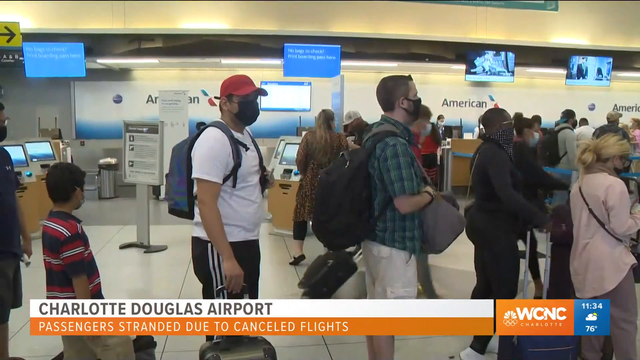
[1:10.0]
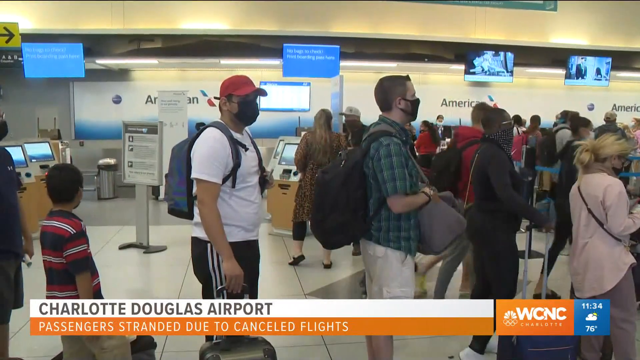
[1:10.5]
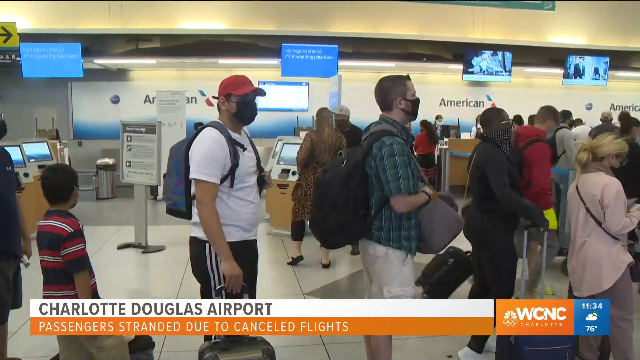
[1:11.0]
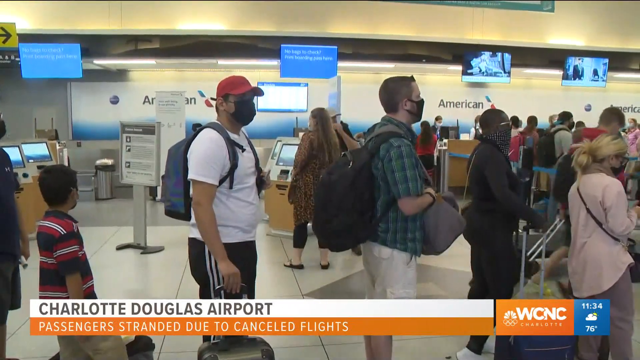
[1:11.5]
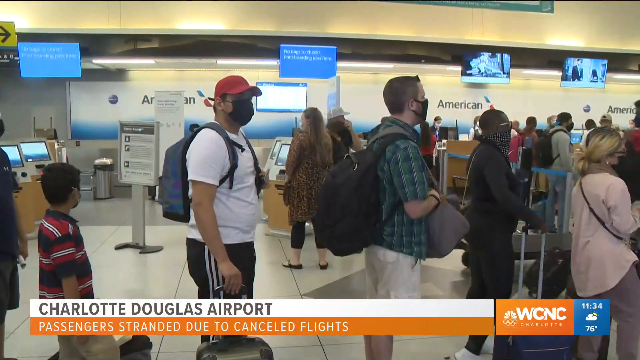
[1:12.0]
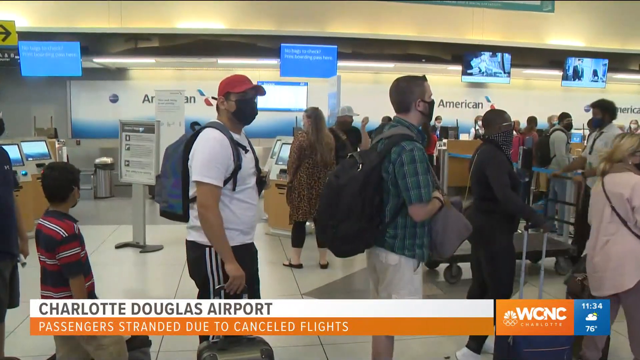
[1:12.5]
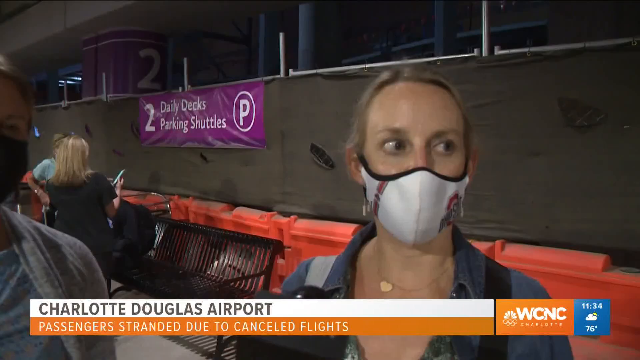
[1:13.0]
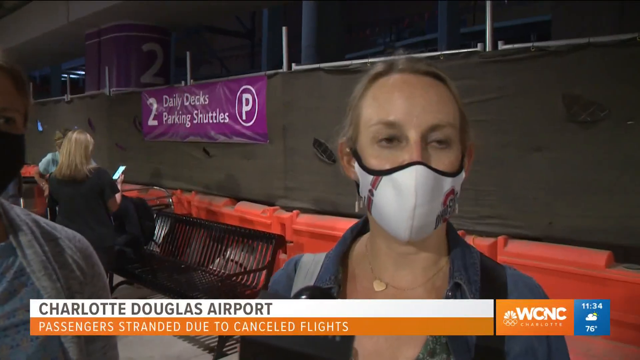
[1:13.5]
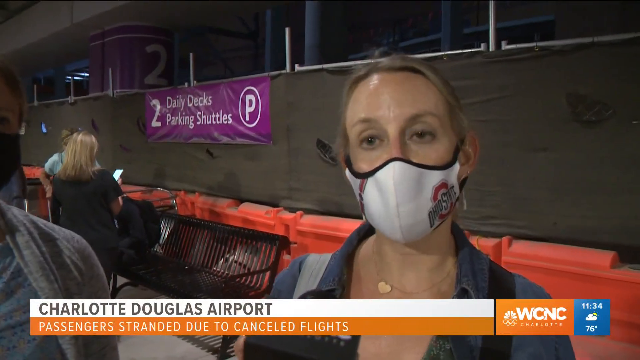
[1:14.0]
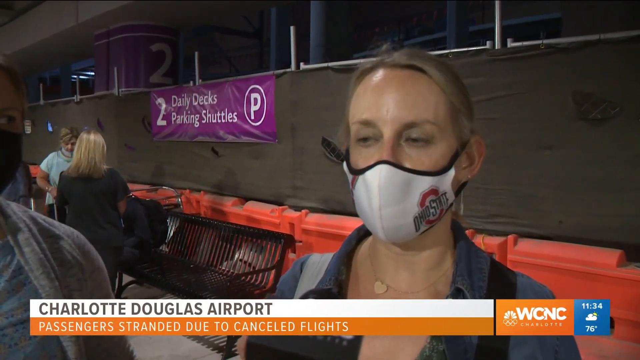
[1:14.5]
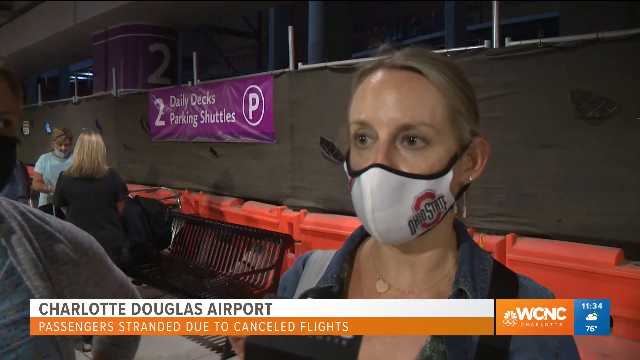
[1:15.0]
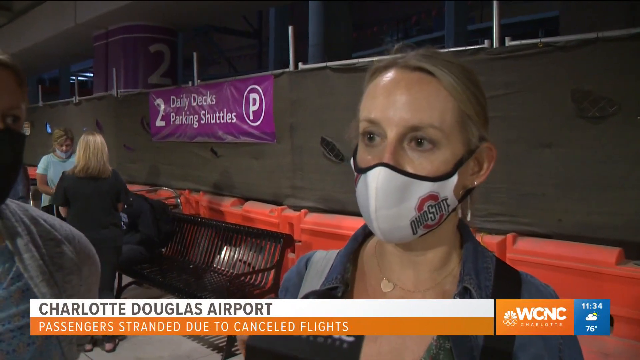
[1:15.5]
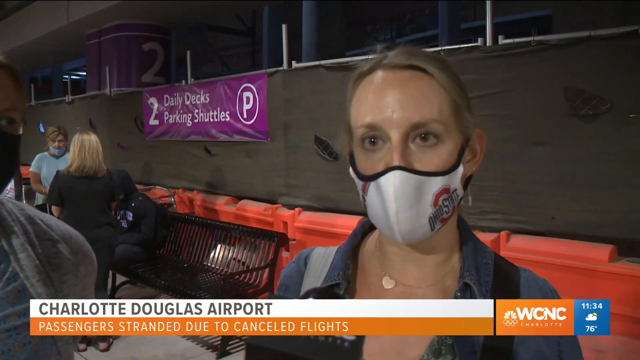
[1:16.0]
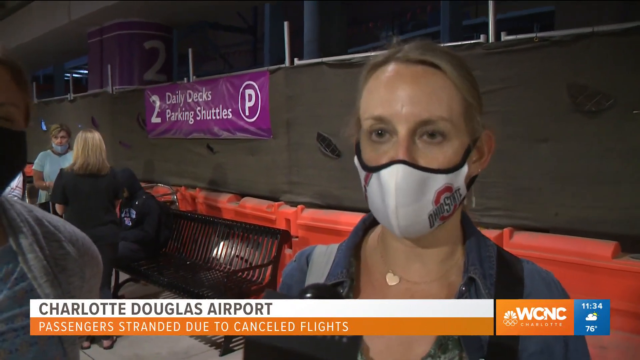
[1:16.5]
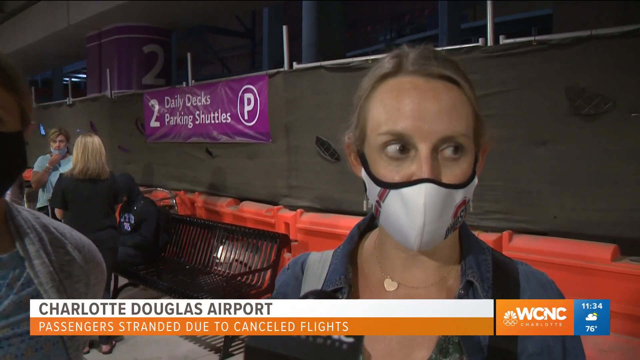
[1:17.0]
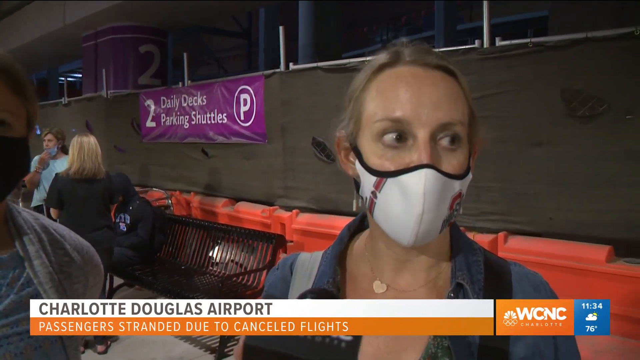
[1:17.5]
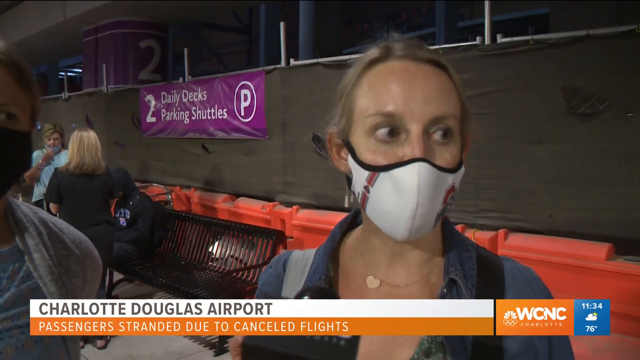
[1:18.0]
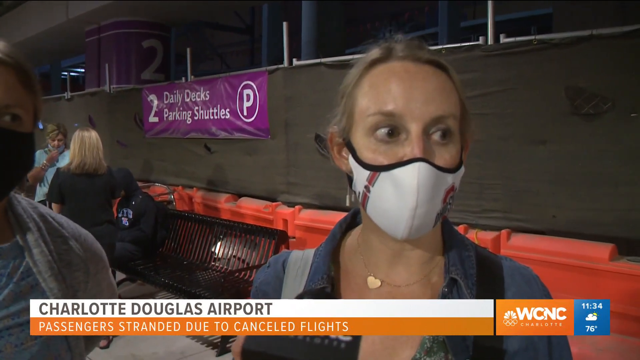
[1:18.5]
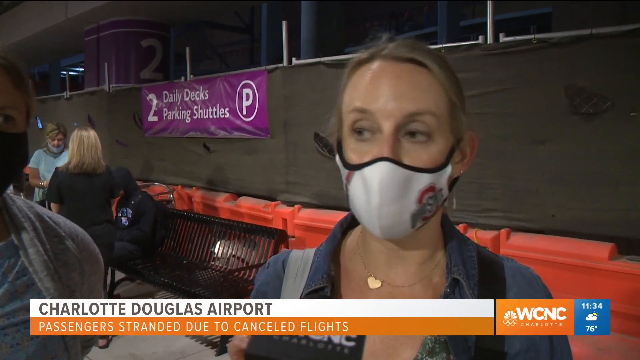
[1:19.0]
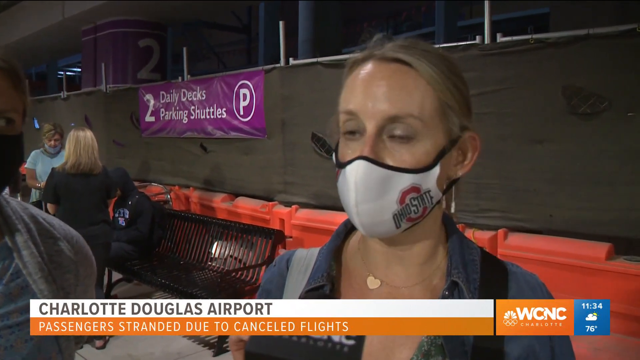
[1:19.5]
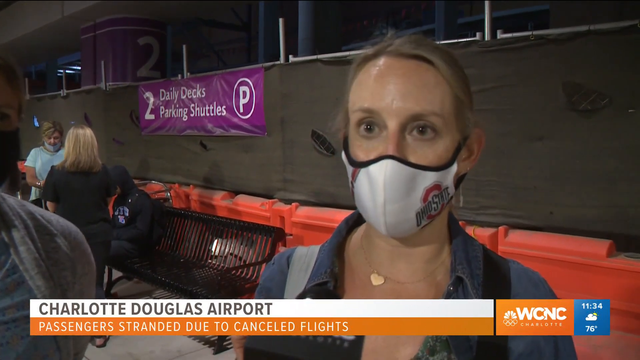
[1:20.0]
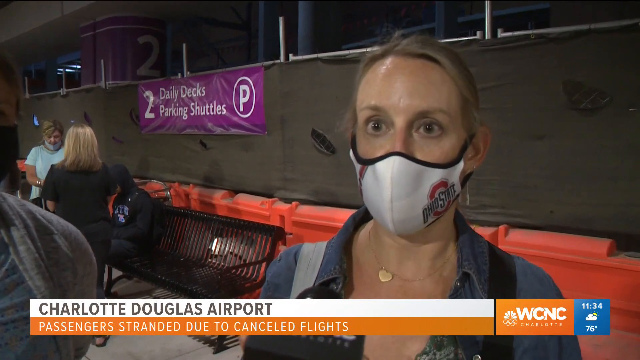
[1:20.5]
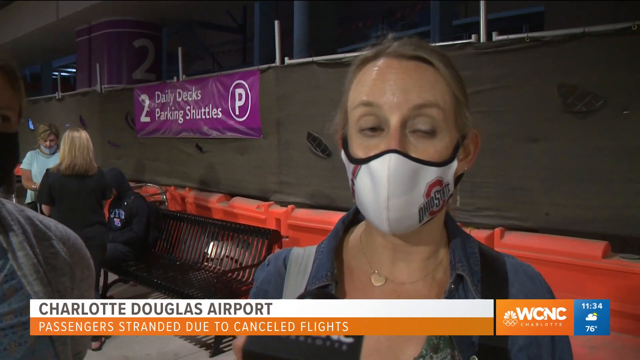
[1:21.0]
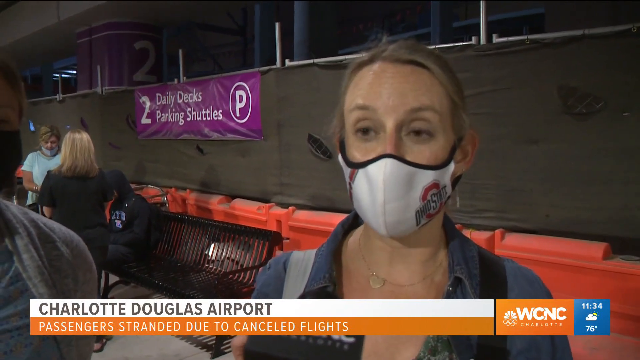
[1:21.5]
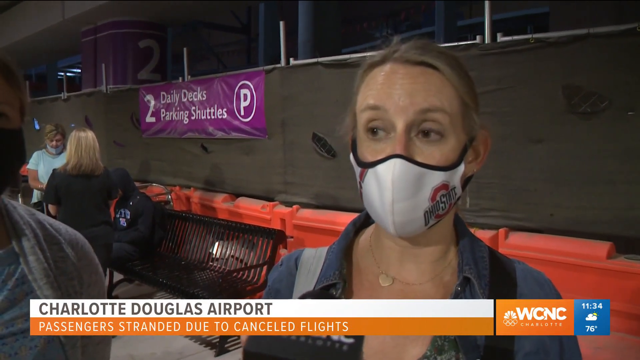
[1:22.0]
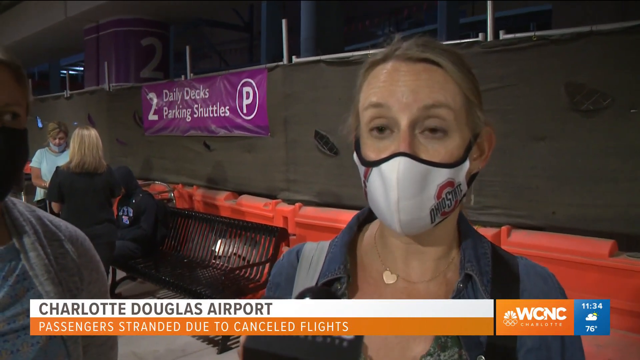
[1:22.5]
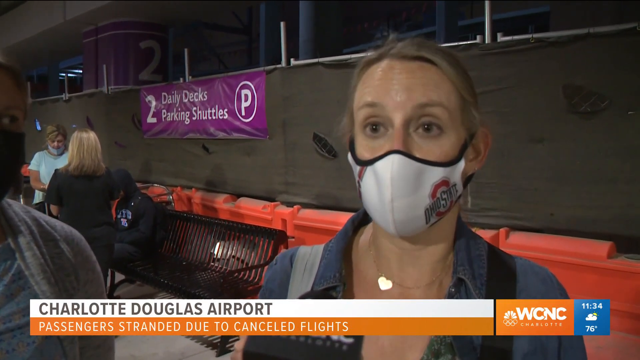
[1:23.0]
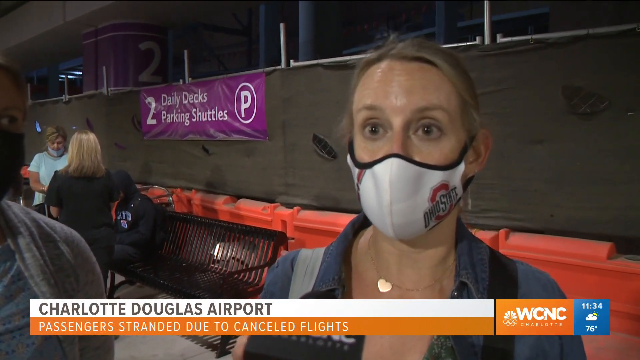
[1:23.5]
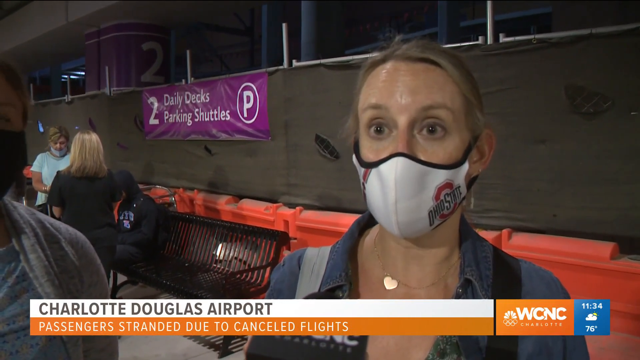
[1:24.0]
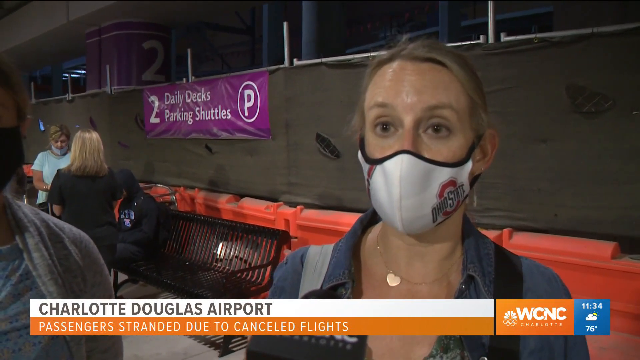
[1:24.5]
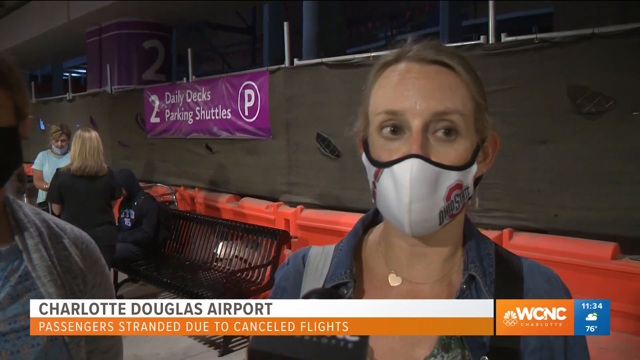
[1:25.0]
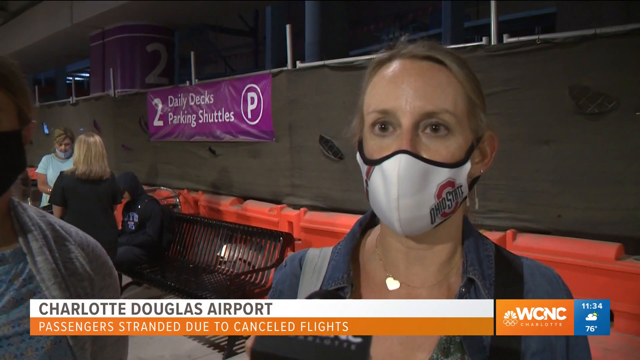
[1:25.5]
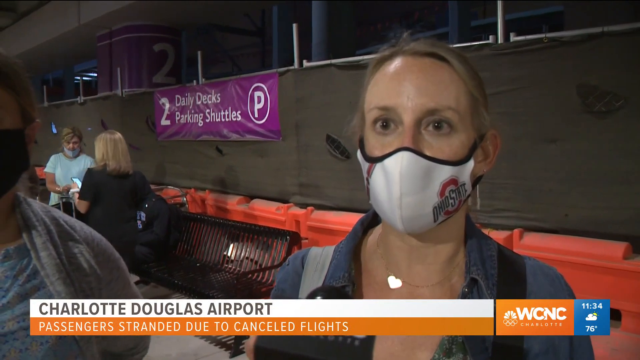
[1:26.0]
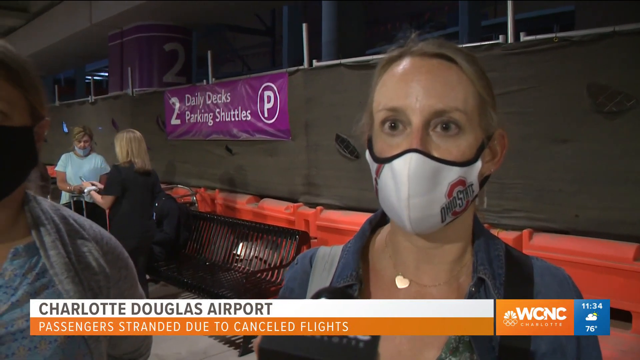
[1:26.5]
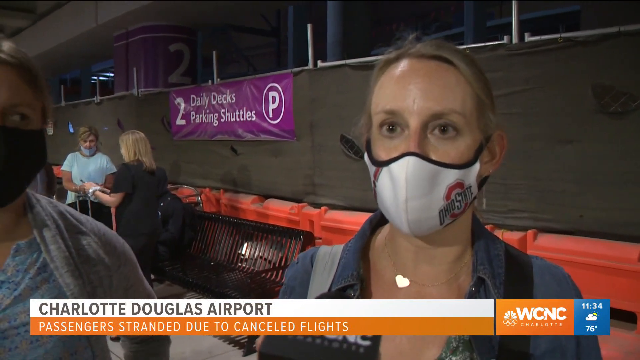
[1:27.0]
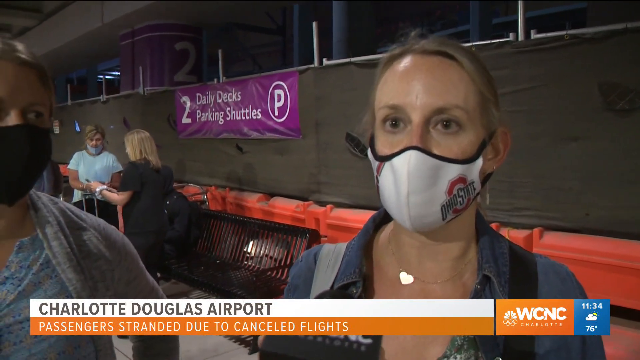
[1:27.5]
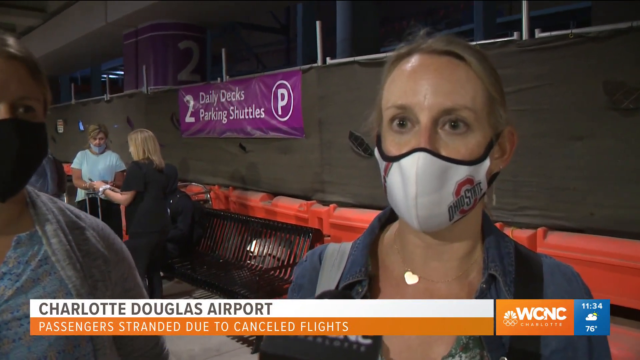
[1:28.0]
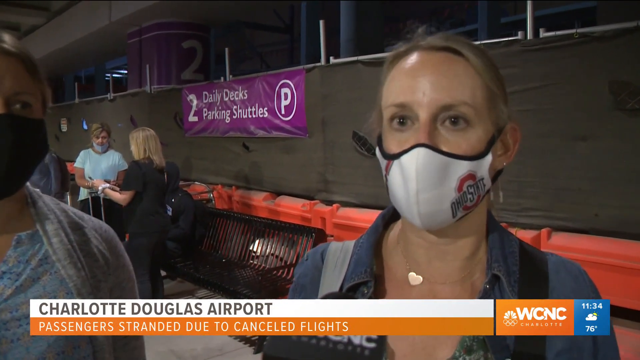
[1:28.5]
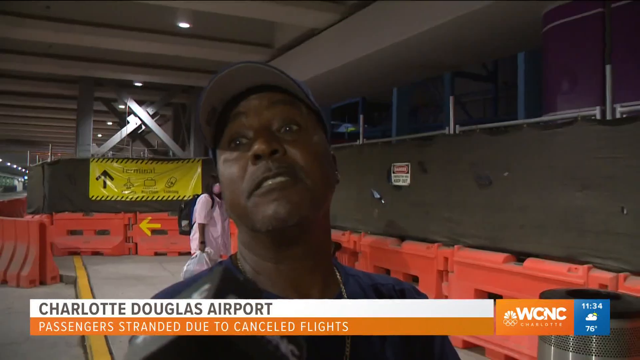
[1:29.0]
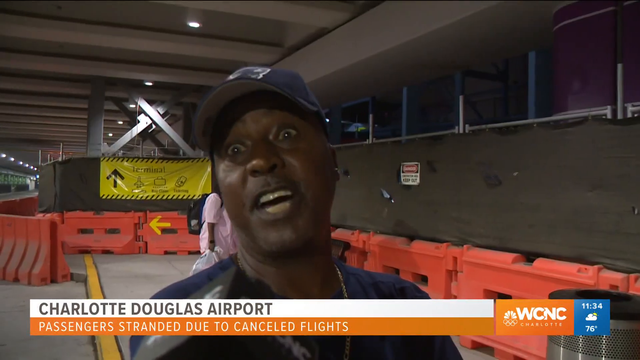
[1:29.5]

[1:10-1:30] The very crowded airport is full of people. Many are waiting, while some are lying down on the ground sleeping and others are sitting. People are in a line that seems to be very long.